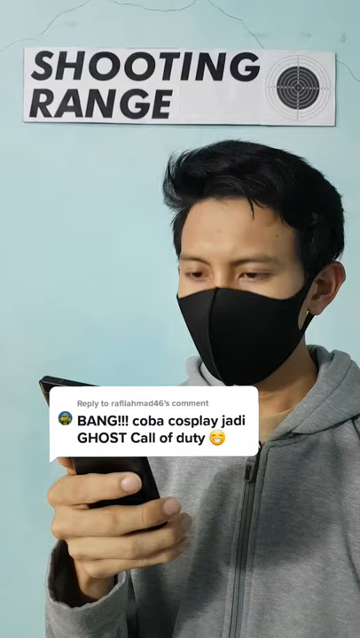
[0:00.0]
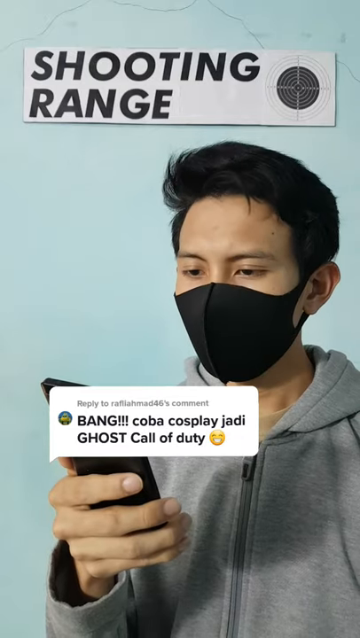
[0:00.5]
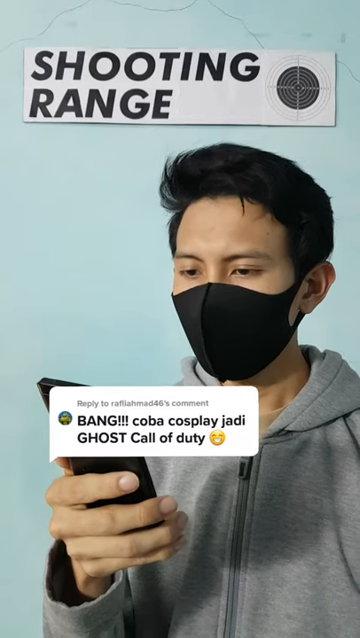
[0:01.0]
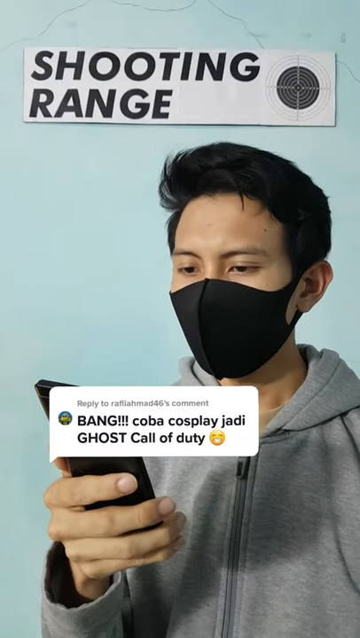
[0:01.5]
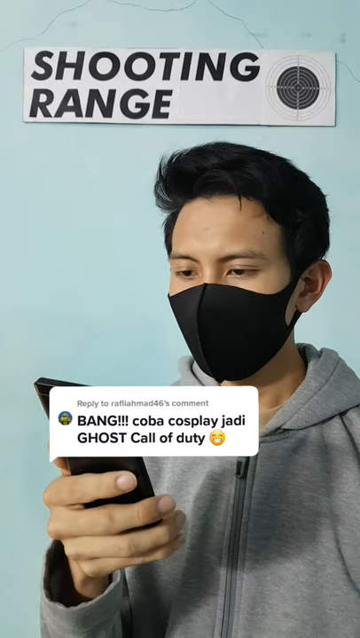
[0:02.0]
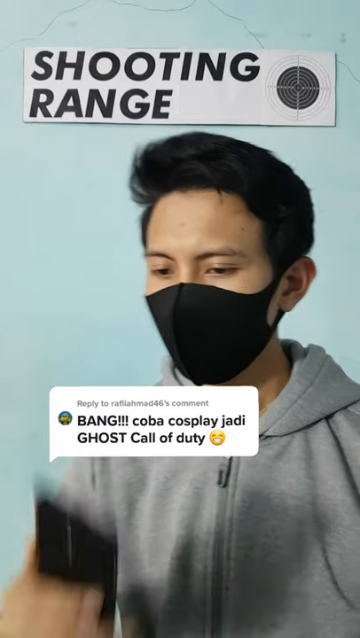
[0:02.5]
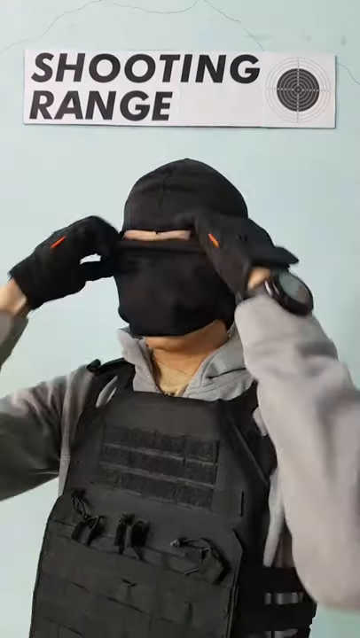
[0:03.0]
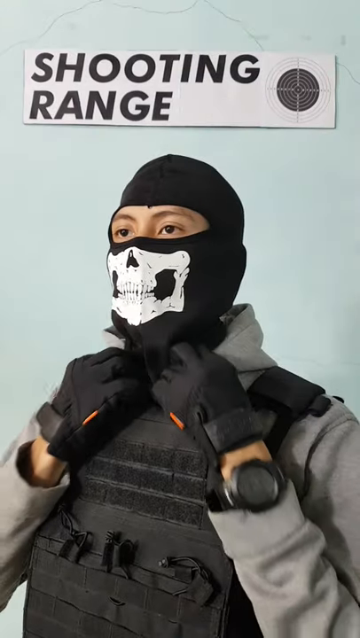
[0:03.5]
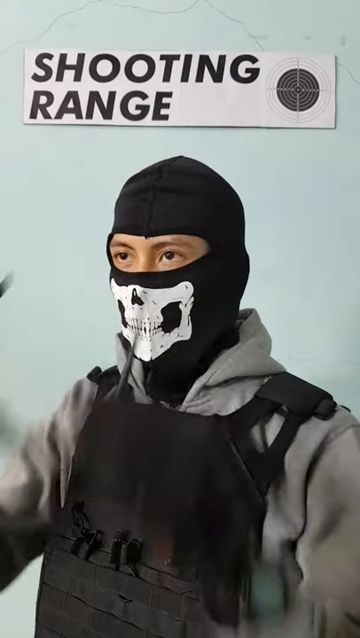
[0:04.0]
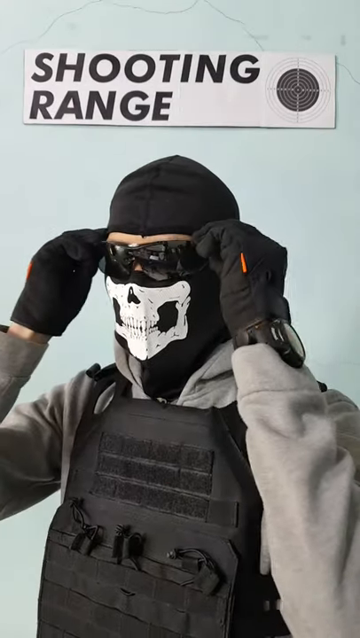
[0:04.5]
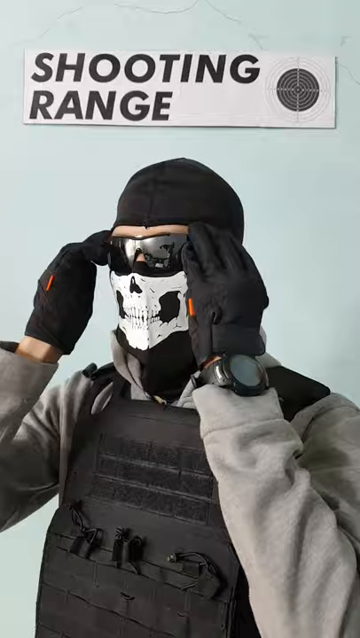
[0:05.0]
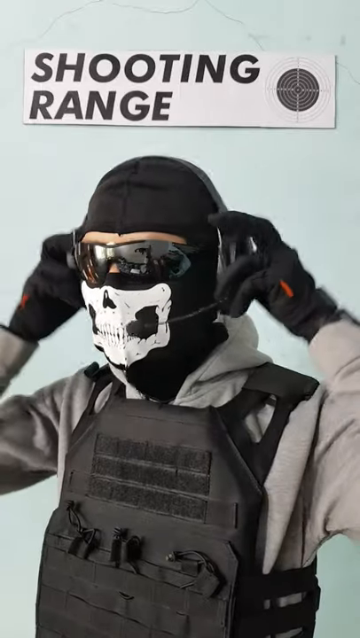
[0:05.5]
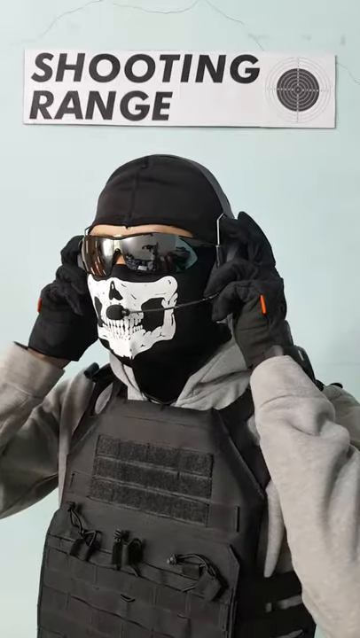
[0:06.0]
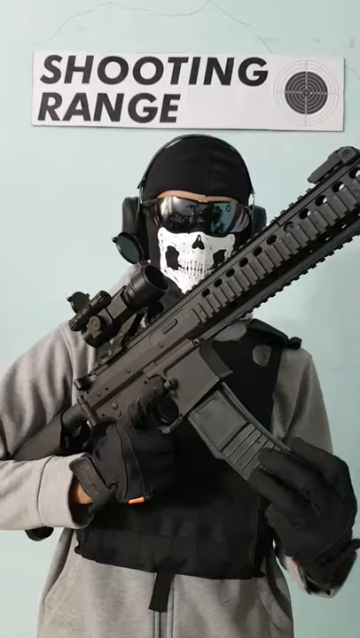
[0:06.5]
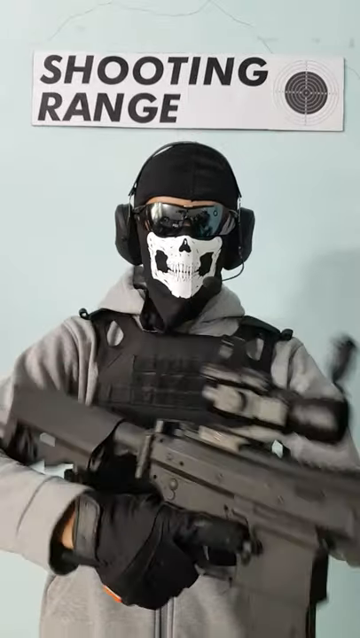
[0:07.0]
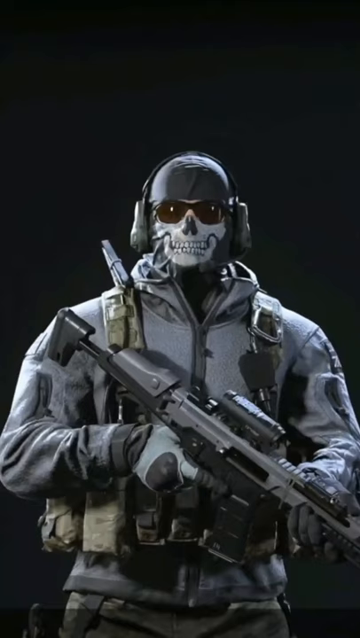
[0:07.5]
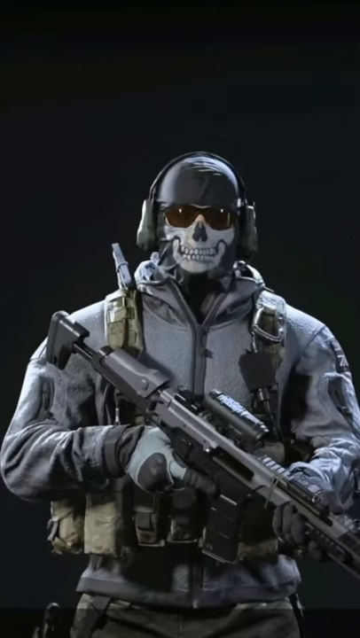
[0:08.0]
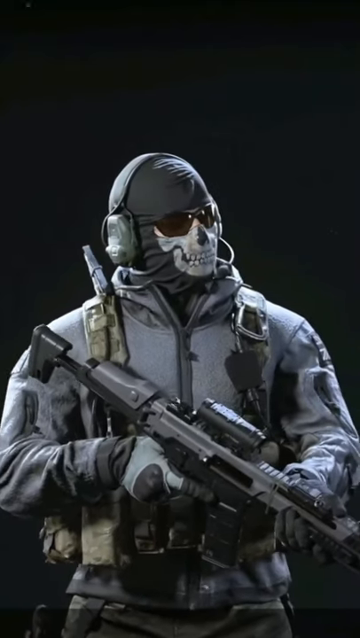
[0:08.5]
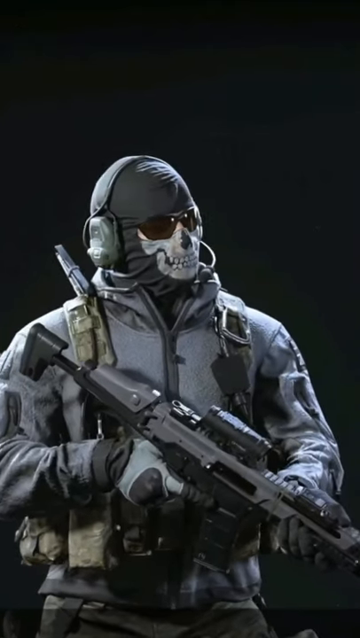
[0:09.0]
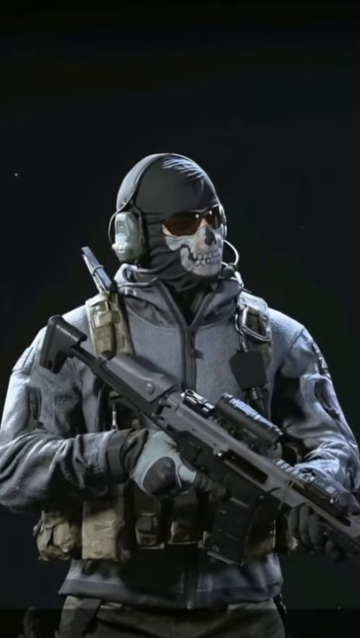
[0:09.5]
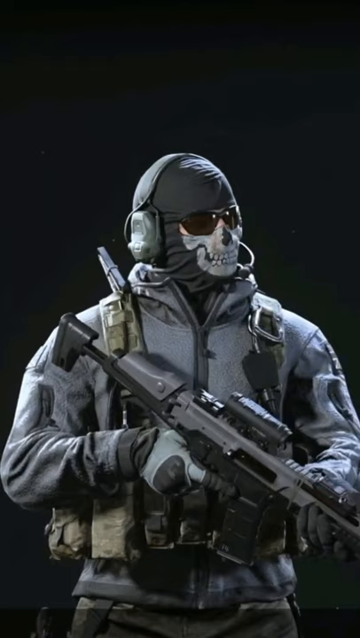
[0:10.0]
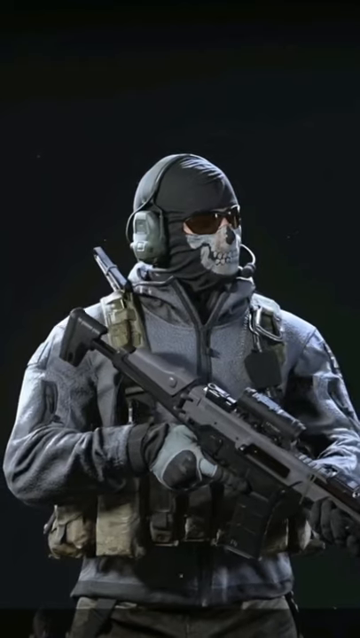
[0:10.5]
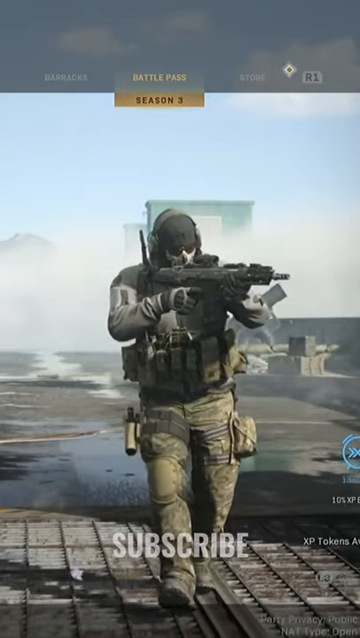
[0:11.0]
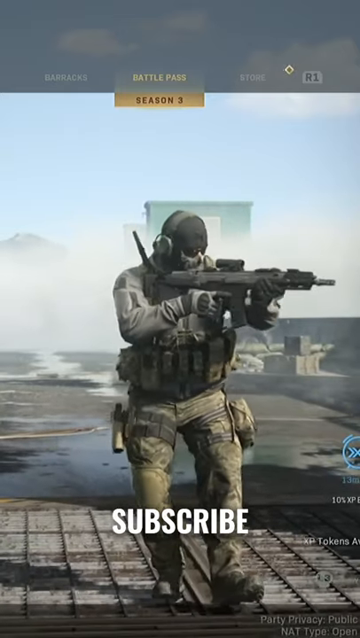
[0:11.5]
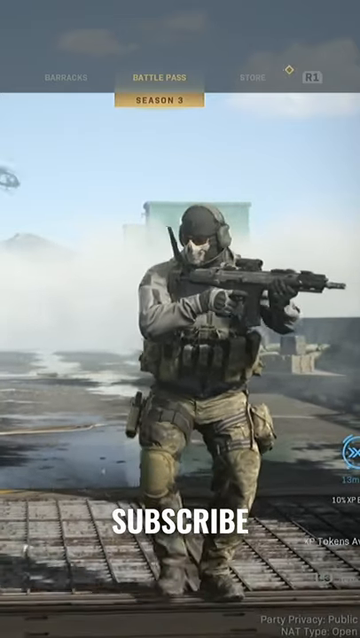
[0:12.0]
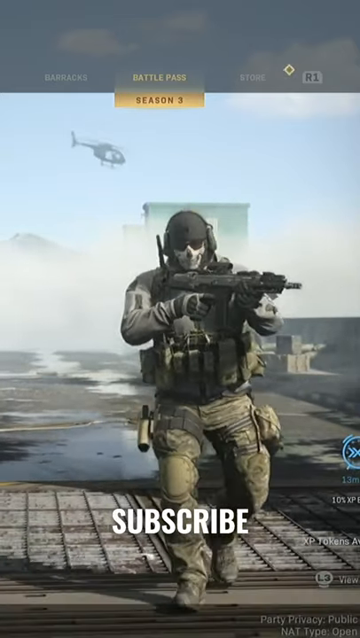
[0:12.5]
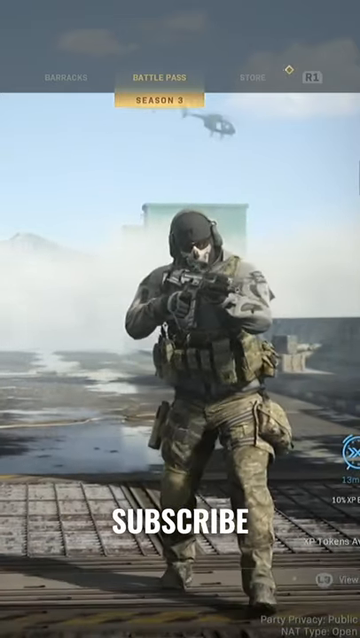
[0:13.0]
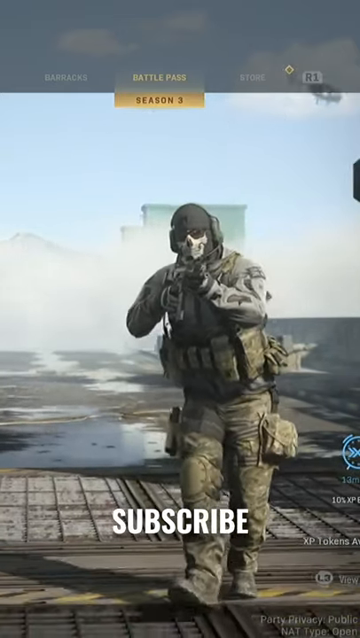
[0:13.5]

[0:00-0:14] A person cosplays as Ghost from Call of Duty. At first the person wears a COVID-type mask and looks at a phone. Text on screen appears to read "bang, cosplay, Jedi, Ghost, Call of Duty", and text in the background says something about "Call of Duty range". The person then puts on a balaclava with a skull face on it, a pair of glasses, a bulletproof vest, a sweatshirt, gloves, a headset and a huge machine gun, and an overcoat goes over all of that. The character is then shown on a black background, after which the video game background from Call of Duty is superimposed behind the cosplayer, so it looks like they are in the game. A little note at the bottom of the image says "subscribe".